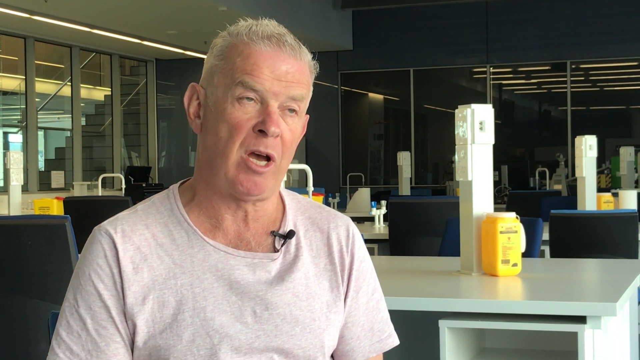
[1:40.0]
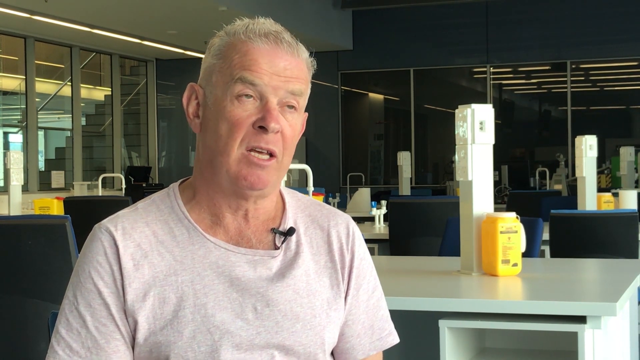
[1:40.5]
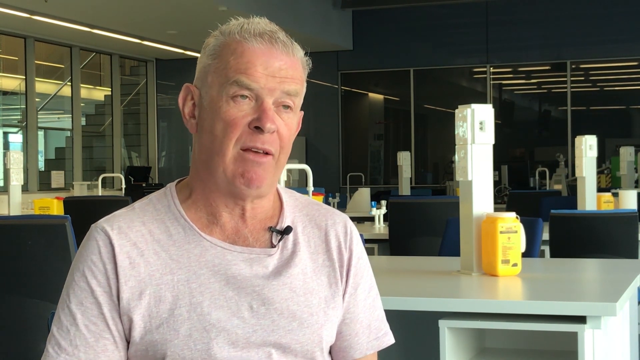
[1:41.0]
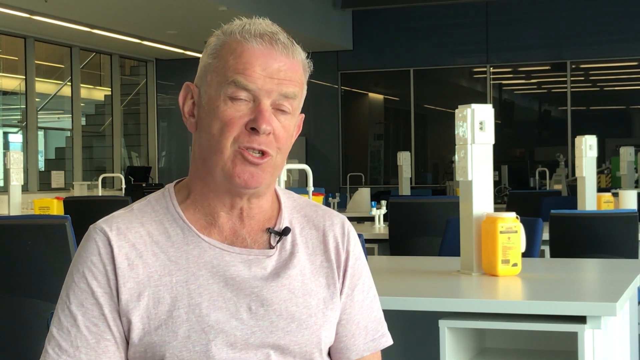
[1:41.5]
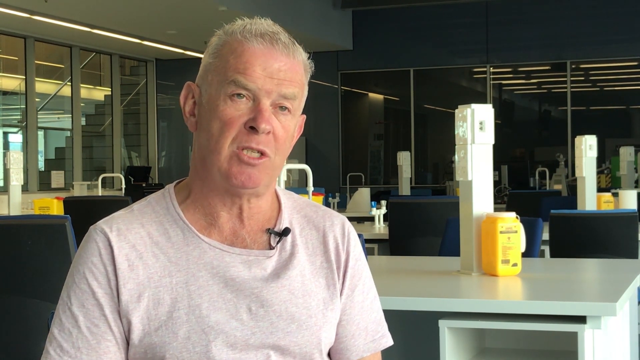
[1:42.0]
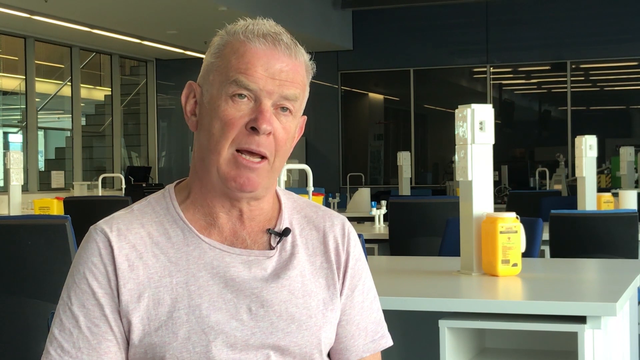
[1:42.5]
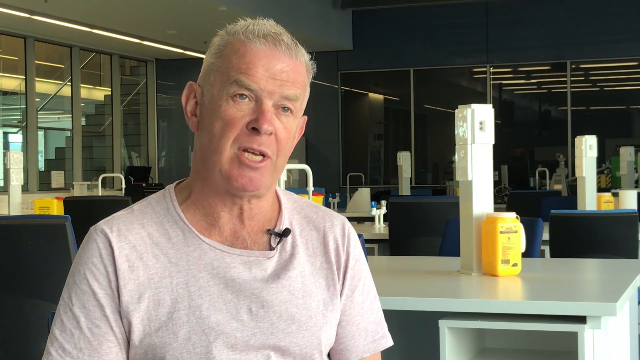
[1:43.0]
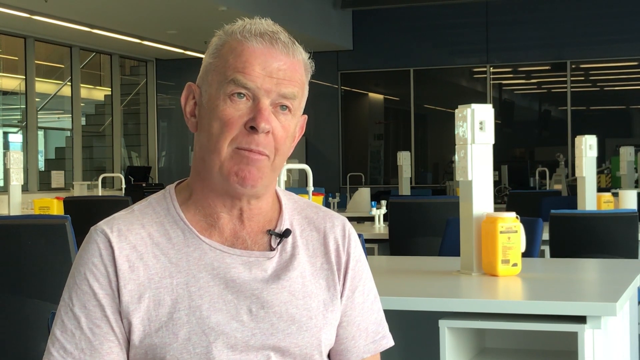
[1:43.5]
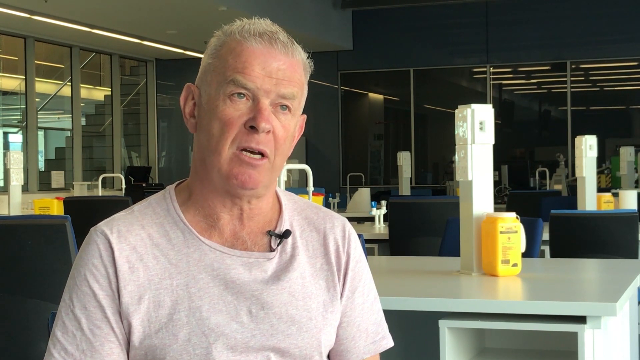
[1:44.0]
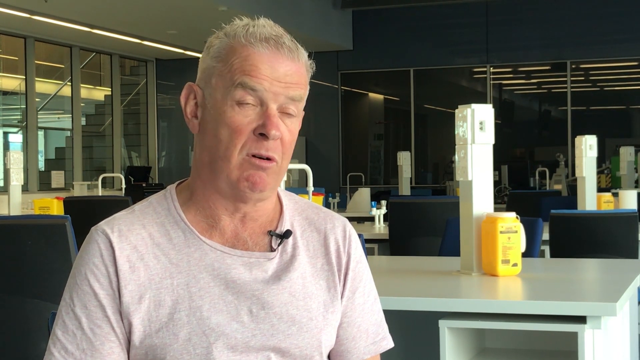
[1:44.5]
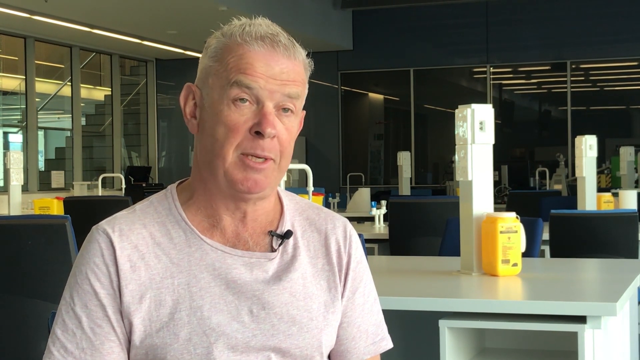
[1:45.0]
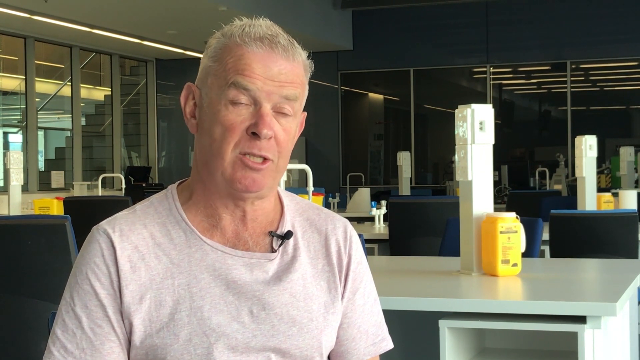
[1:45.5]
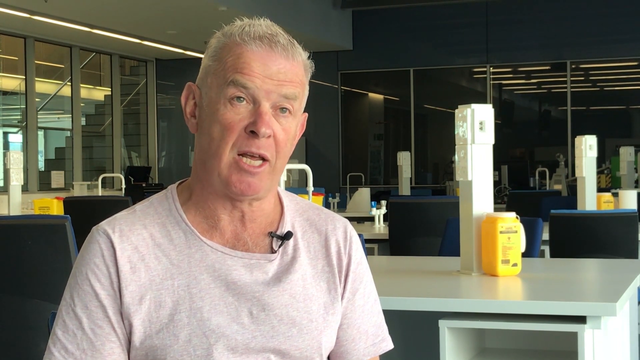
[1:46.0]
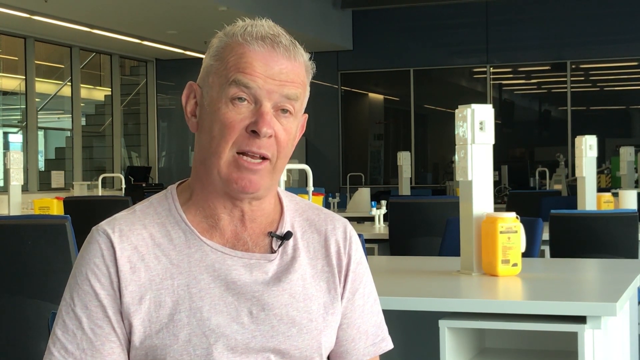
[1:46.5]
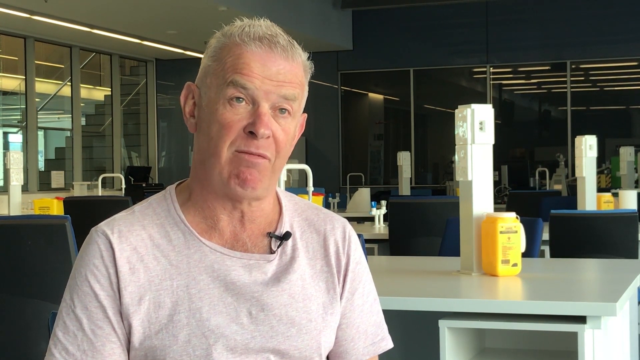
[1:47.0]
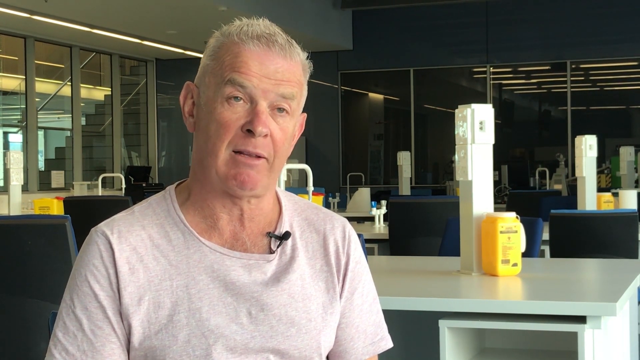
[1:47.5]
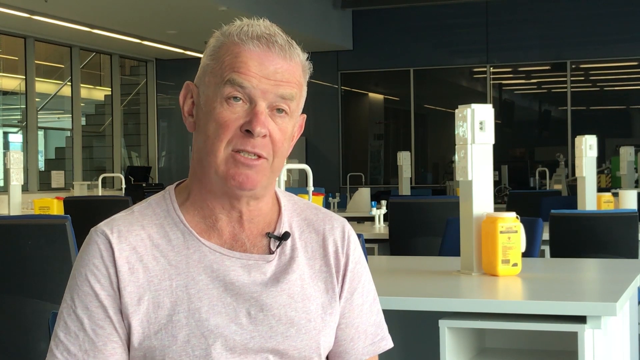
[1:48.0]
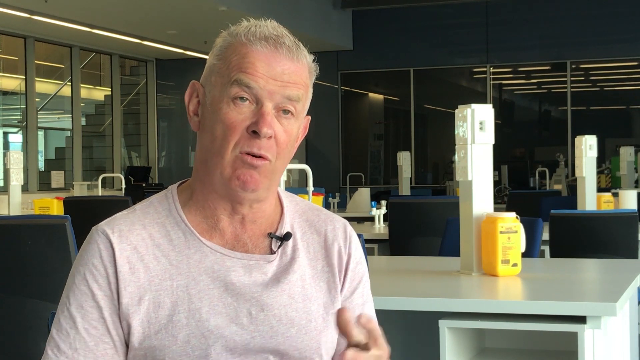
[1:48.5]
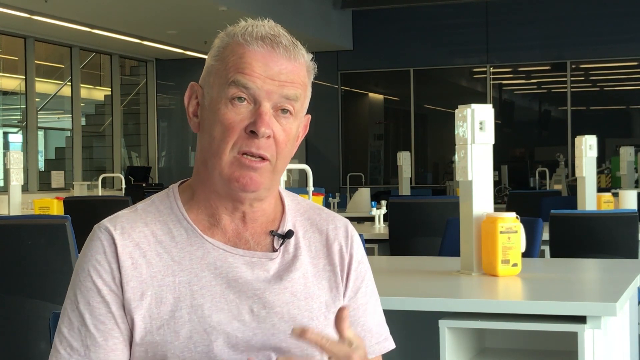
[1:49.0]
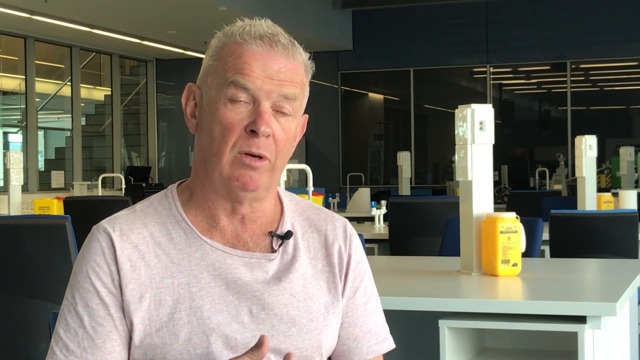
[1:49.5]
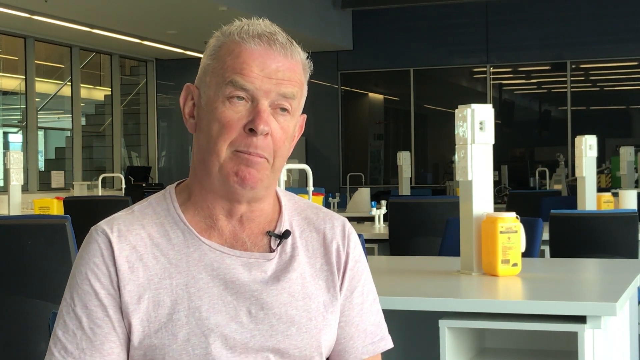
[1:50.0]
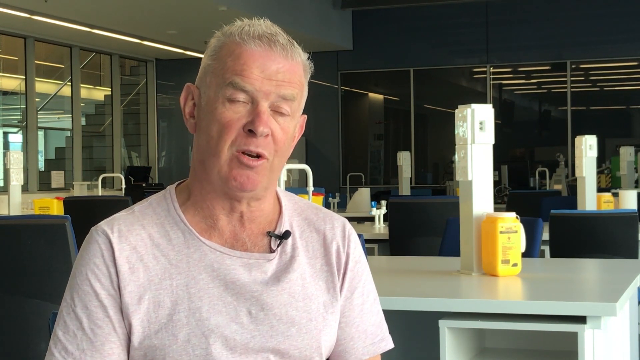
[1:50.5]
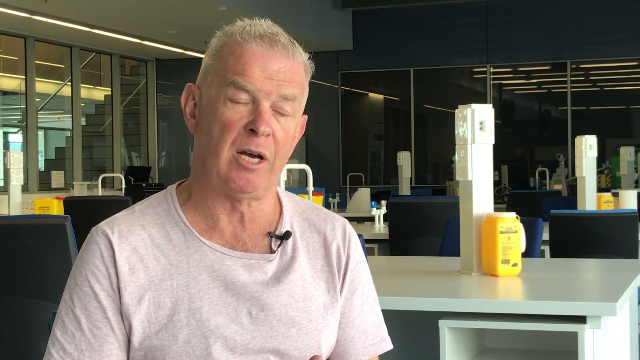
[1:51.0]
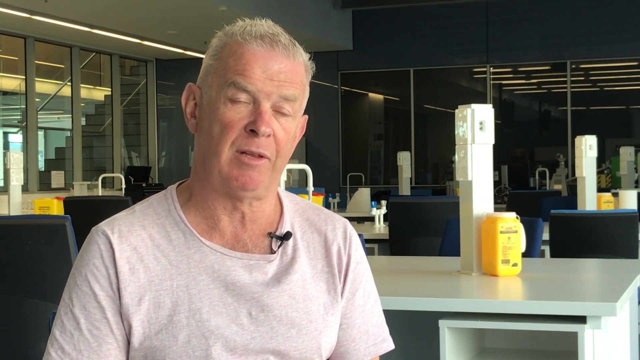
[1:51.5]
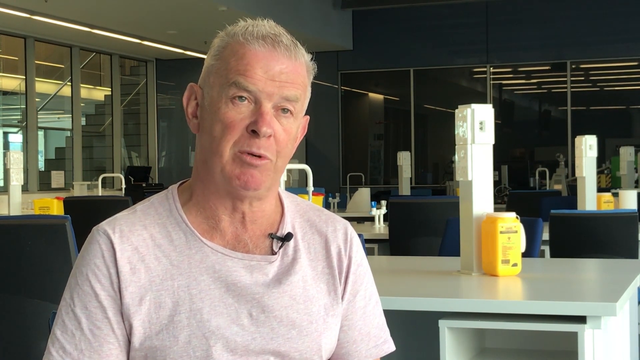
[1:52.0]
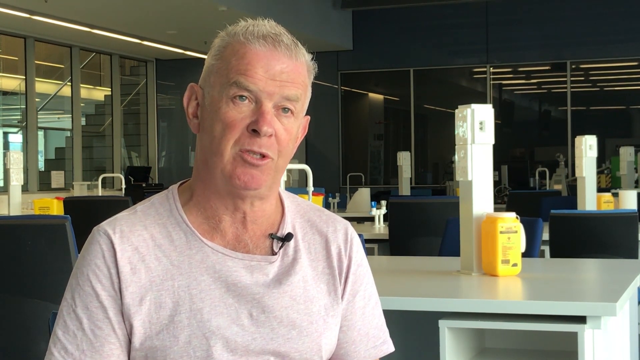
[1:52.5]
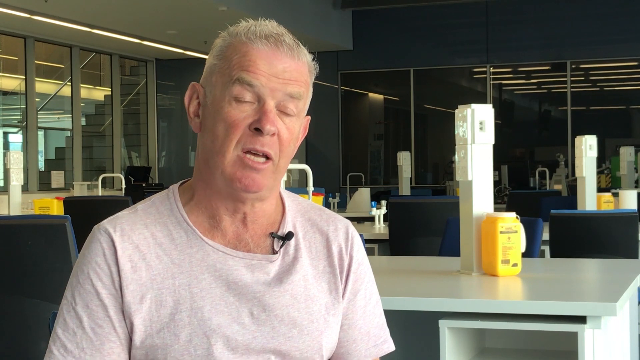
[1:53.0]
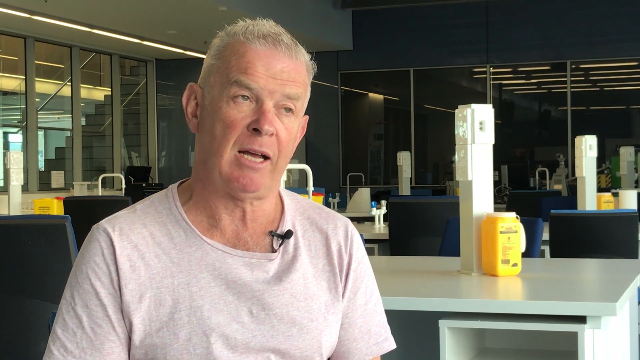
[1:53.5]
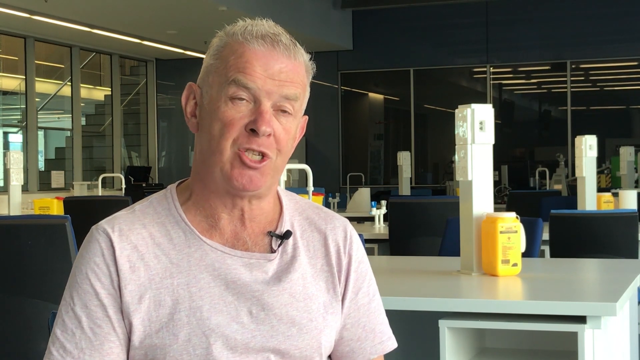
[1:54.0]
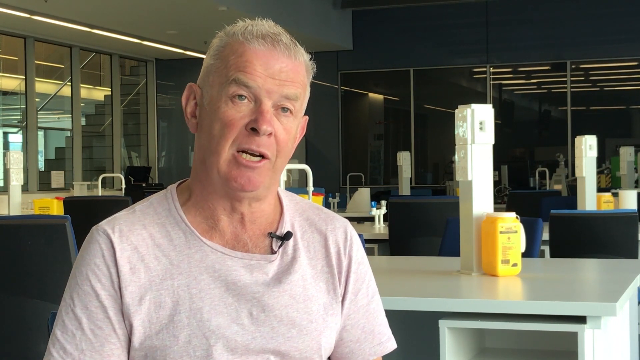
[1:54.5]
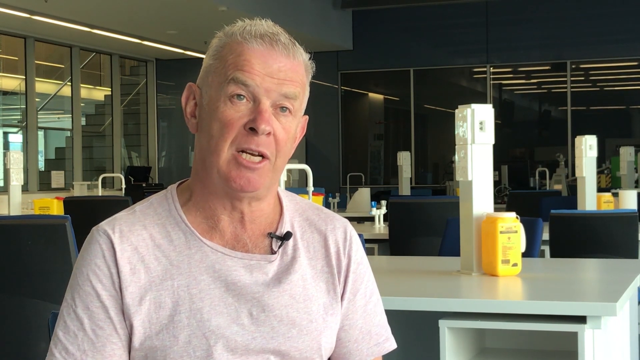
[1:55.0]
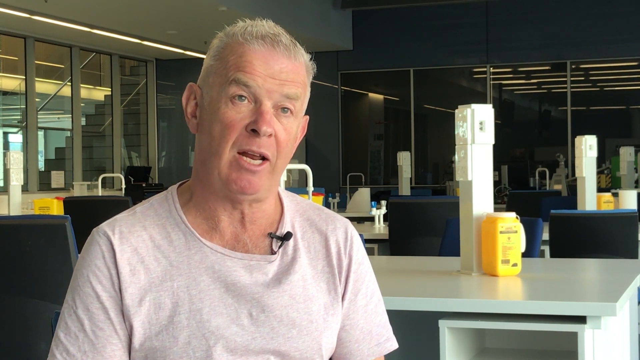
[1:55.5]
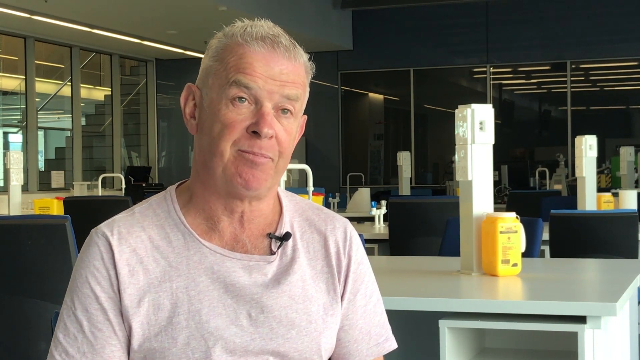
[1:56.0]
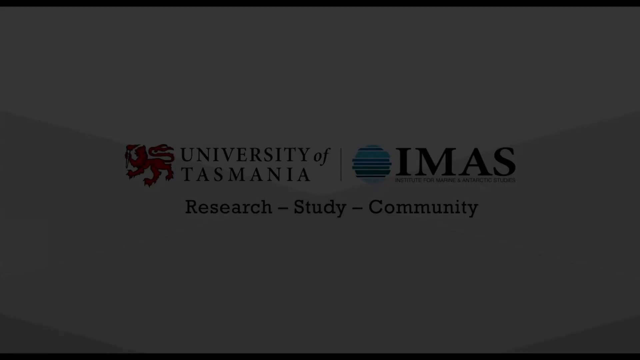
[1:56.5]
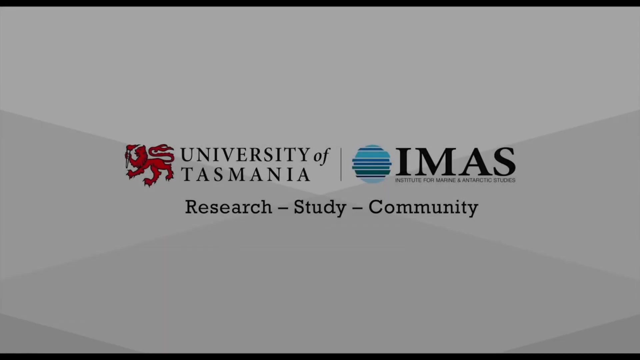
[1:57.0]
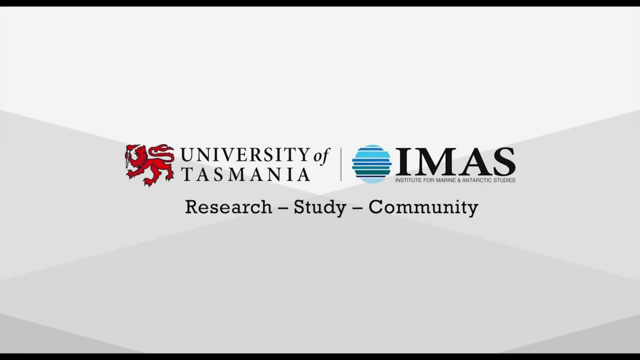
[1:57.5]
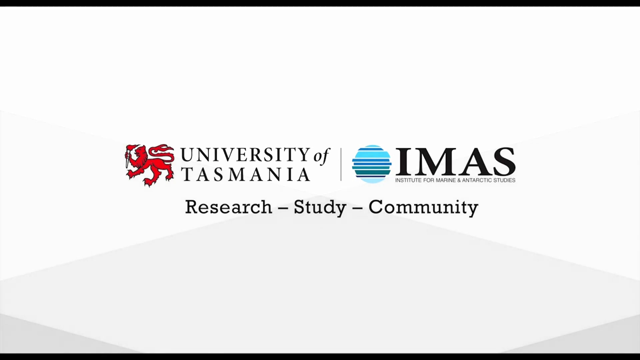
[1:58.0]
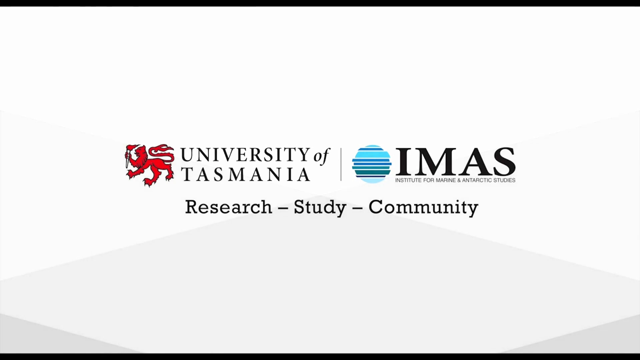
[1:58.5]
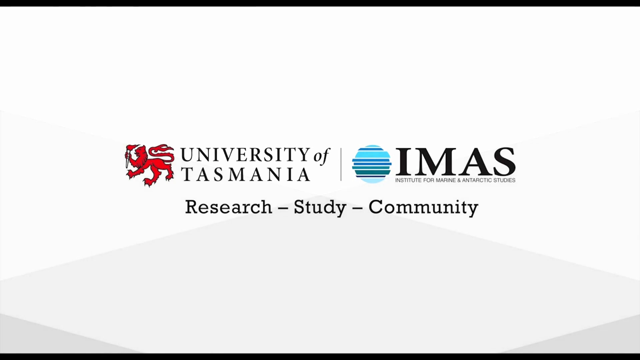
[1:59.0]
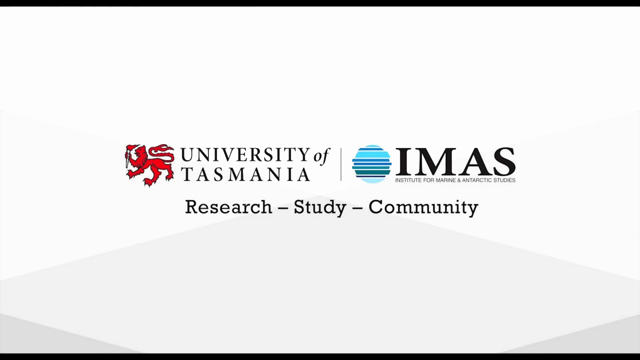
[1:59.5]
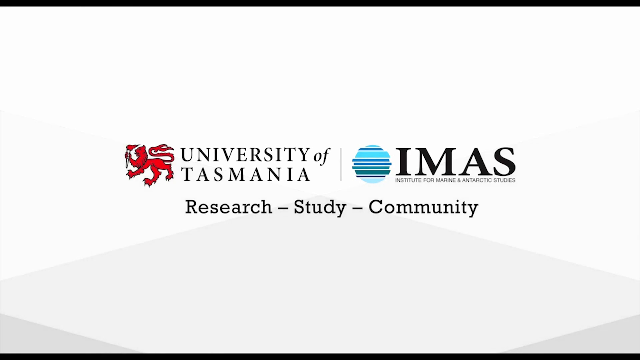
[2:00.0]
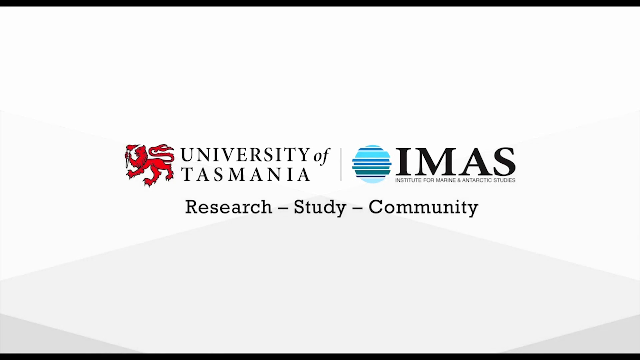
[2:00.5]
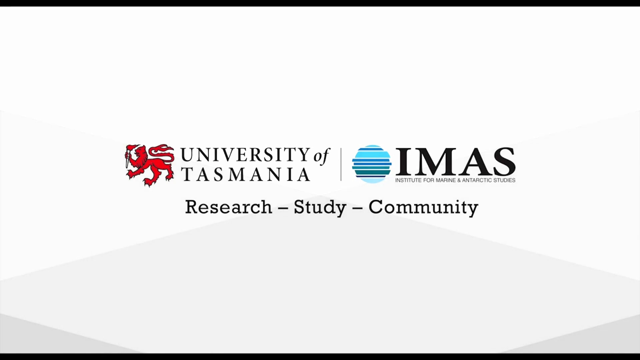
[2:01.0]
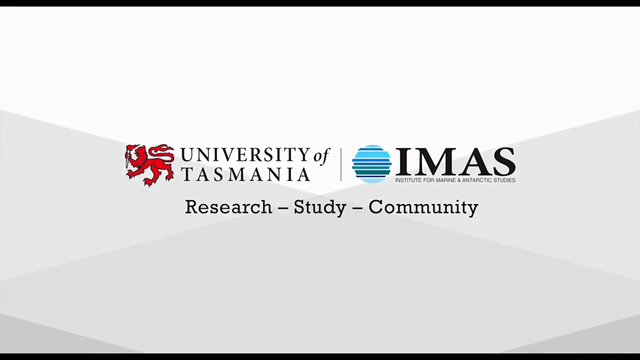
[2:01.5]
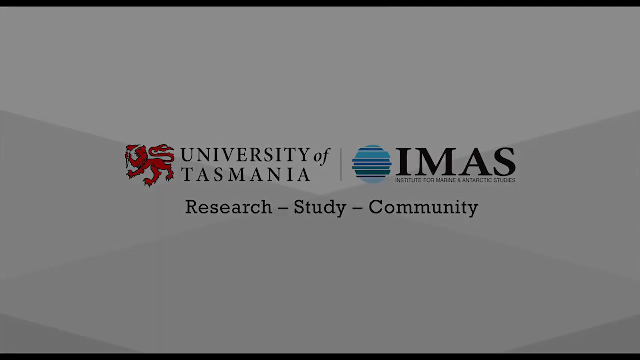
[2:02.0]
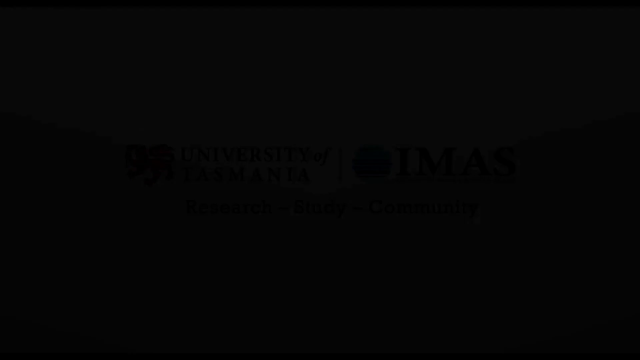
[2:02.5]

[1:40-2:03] An older man wearing a crewneck collar-style t-shirt is in a lab. The back walls on the right and left are glass; through the left one a lobby and a set of stairs going upwards are visible. The man talks towards the camera with his arms next to his sides. Behind him are multiple lab benches with tall towers for electrical plugs and ethernet plugs, various valves for water or gas supplies, and each table has its own yellow hazardous materials disposal bin. The man shakes his head as he continues talking towards the camera. He moves his hand up and down in a sort of circular motion, then puts his hands back down by his side. He occasionally looks towards the right as he thinks of words, then continues talking towards the camera. The screen then cuts to a white background with multiple lines of text reading "University of Tasmania, IMAS, Institute for Marine and Antarctic Studies, Research Study Community."